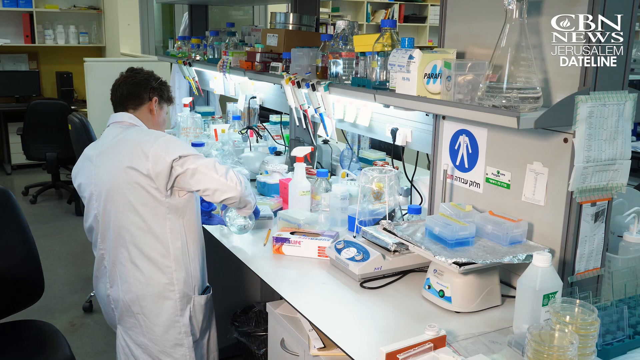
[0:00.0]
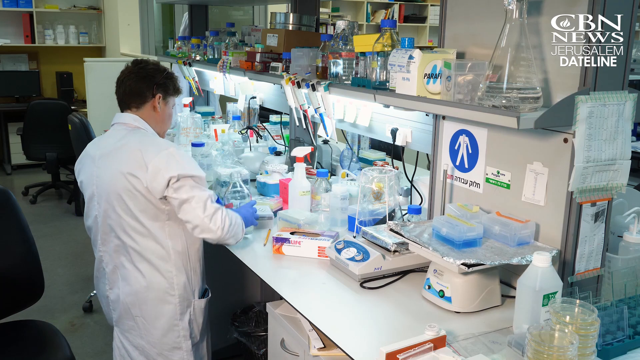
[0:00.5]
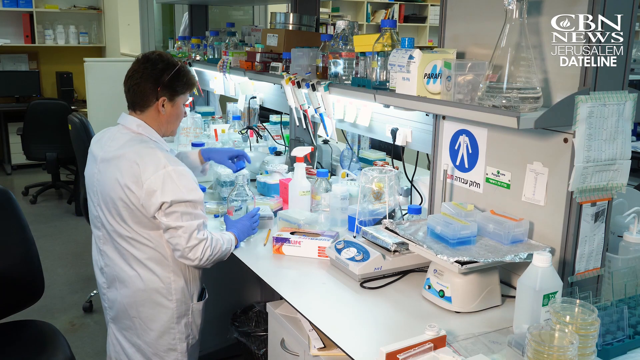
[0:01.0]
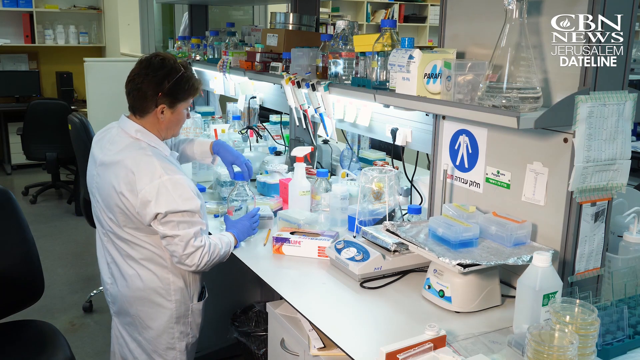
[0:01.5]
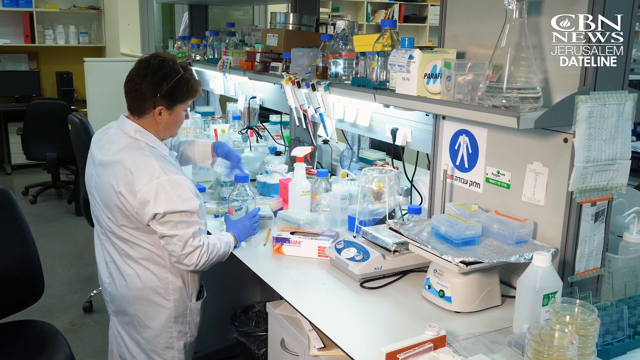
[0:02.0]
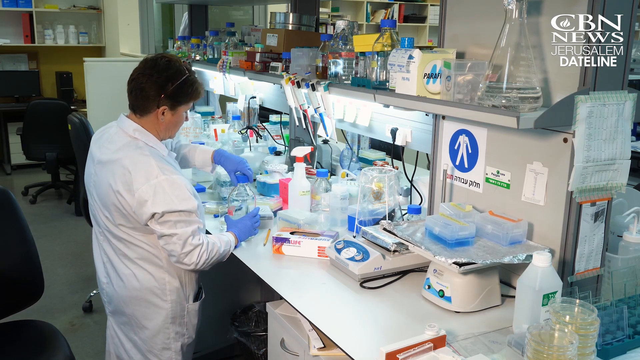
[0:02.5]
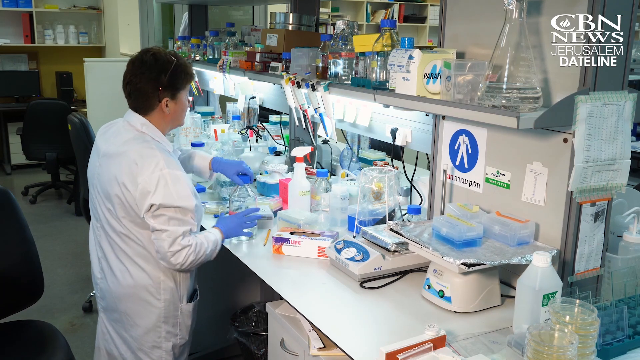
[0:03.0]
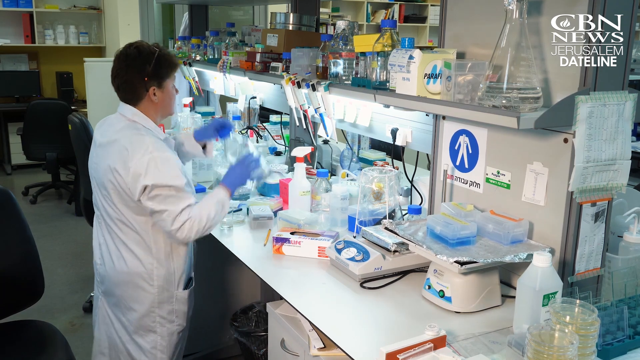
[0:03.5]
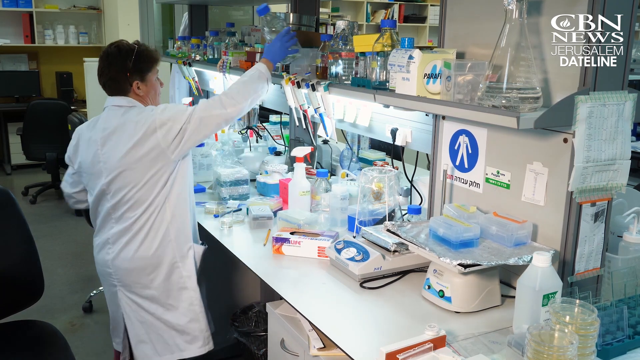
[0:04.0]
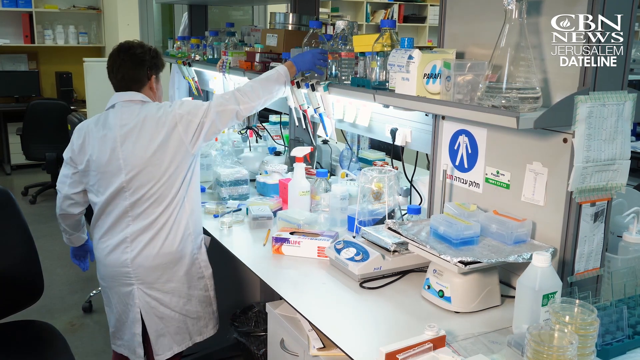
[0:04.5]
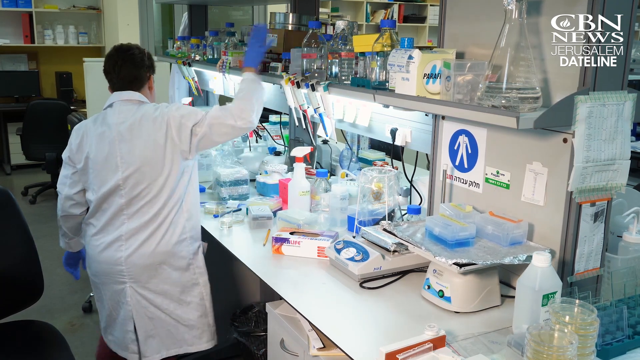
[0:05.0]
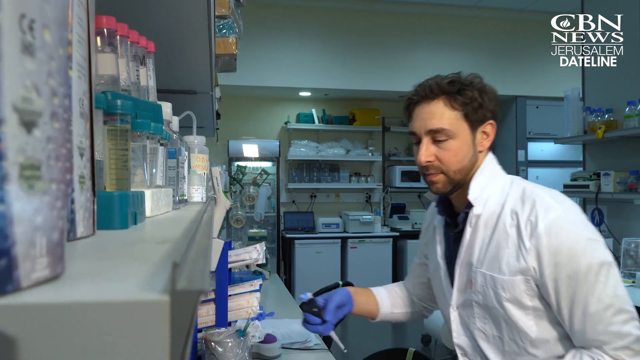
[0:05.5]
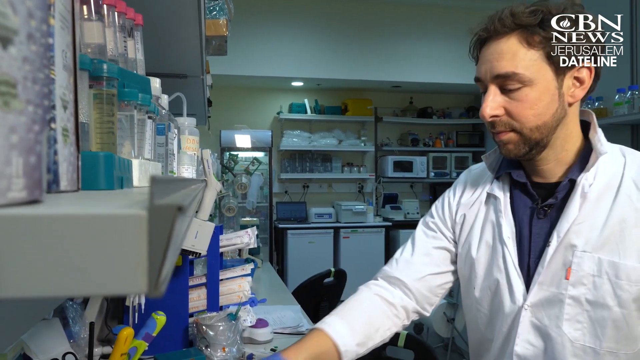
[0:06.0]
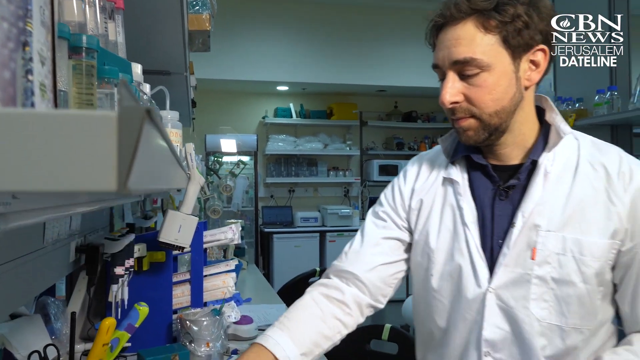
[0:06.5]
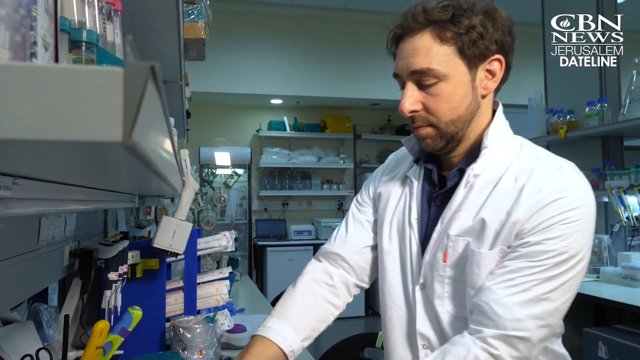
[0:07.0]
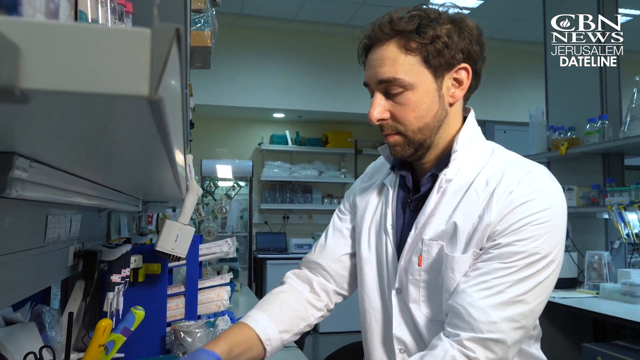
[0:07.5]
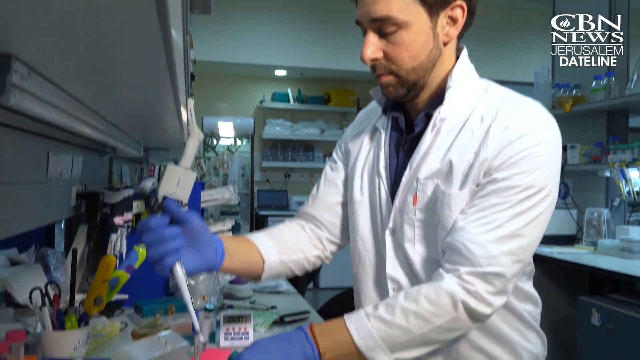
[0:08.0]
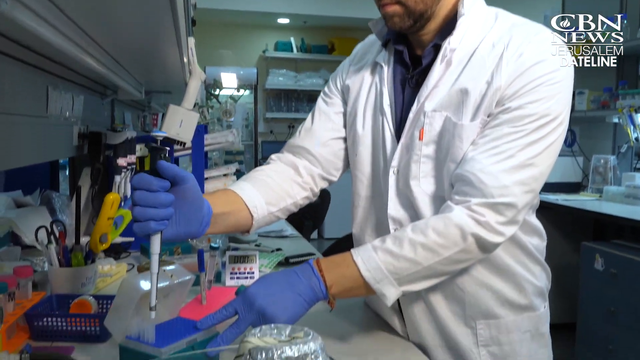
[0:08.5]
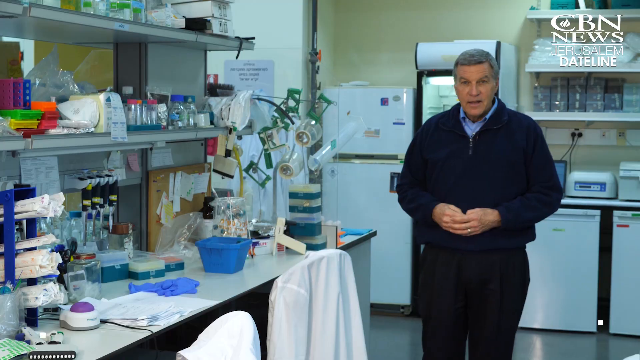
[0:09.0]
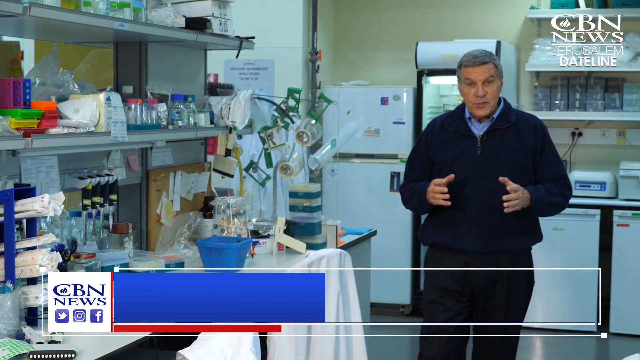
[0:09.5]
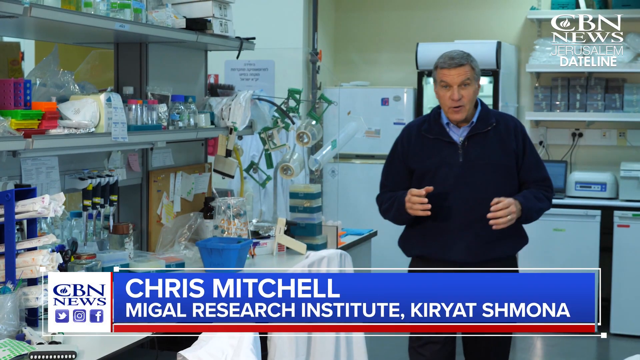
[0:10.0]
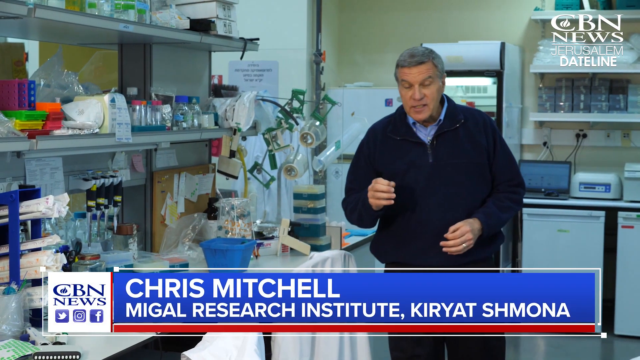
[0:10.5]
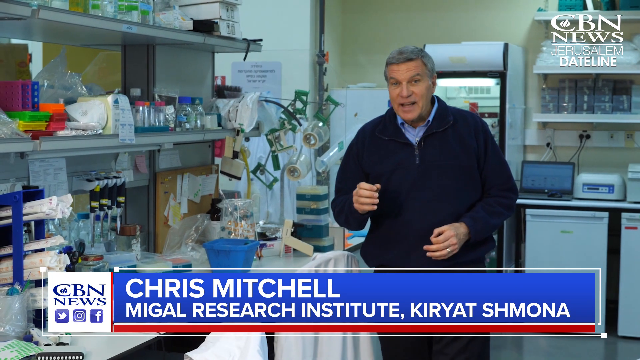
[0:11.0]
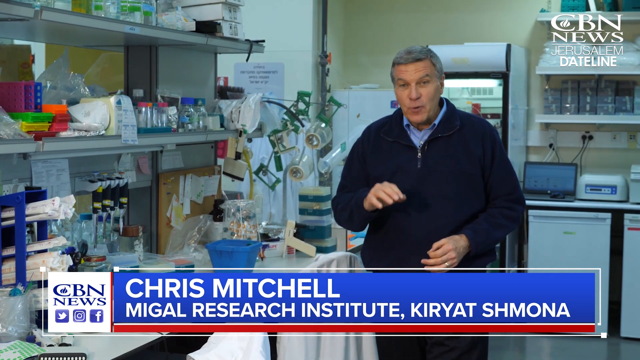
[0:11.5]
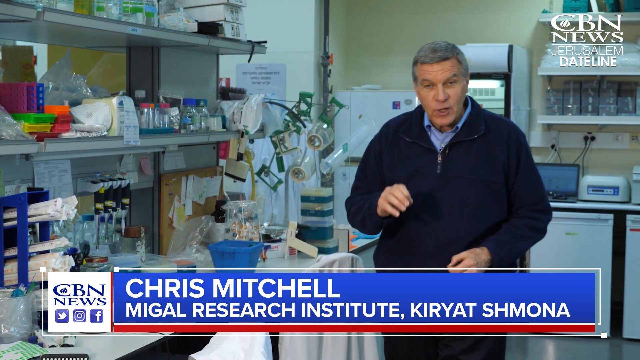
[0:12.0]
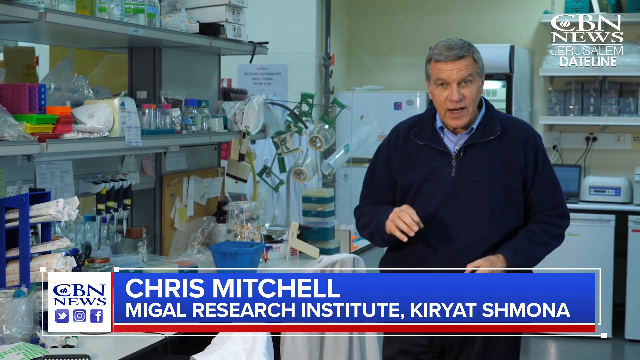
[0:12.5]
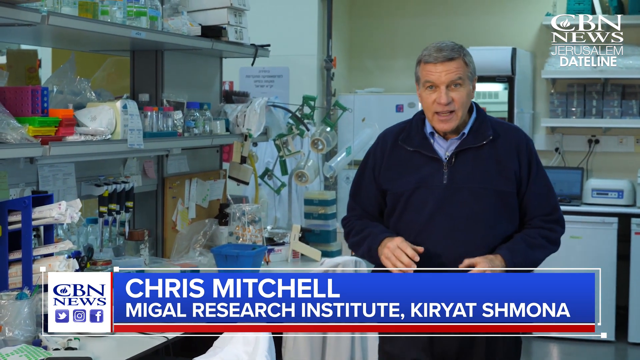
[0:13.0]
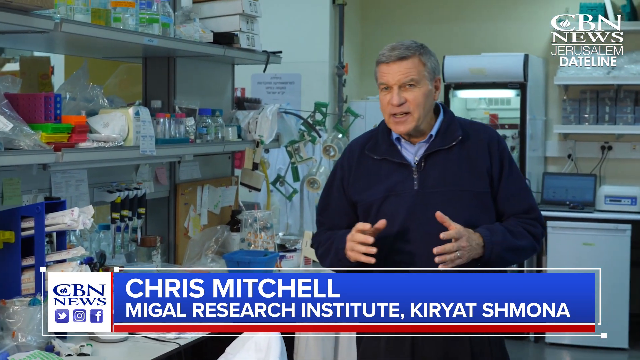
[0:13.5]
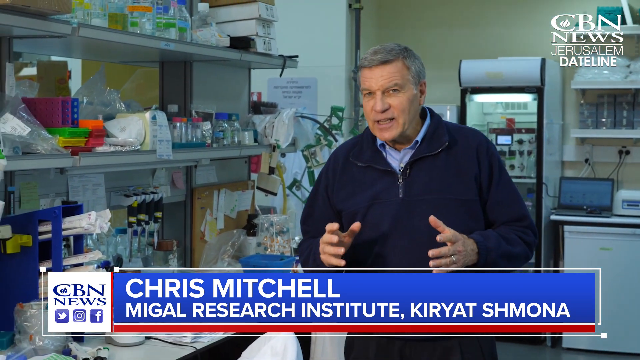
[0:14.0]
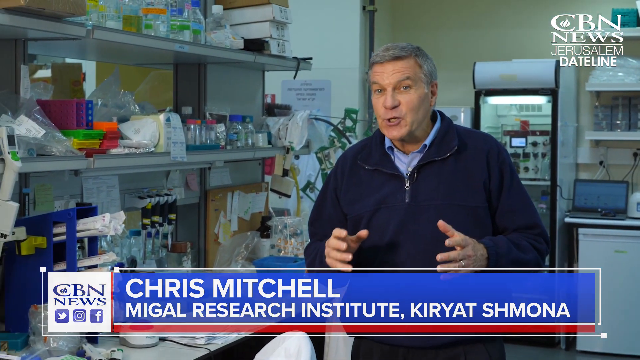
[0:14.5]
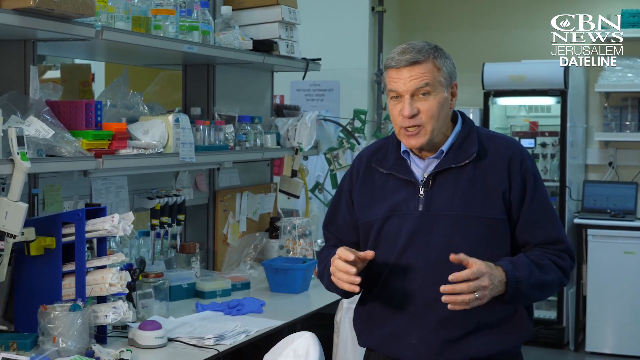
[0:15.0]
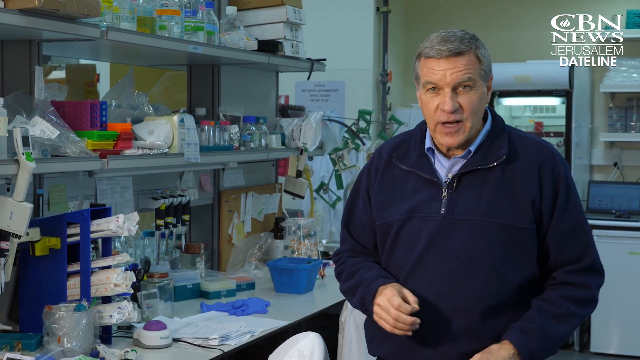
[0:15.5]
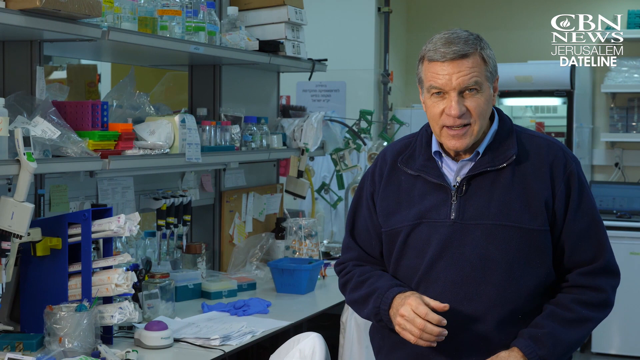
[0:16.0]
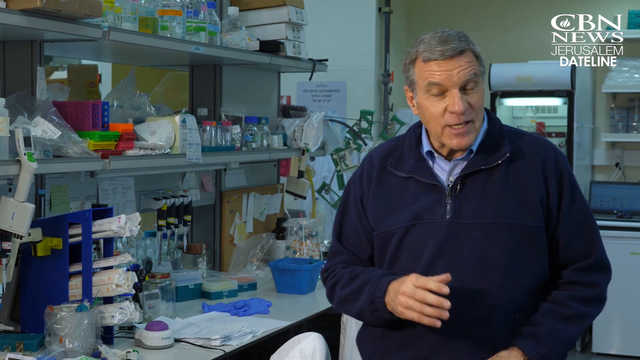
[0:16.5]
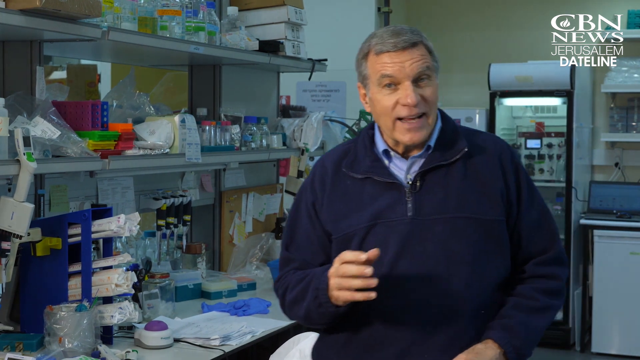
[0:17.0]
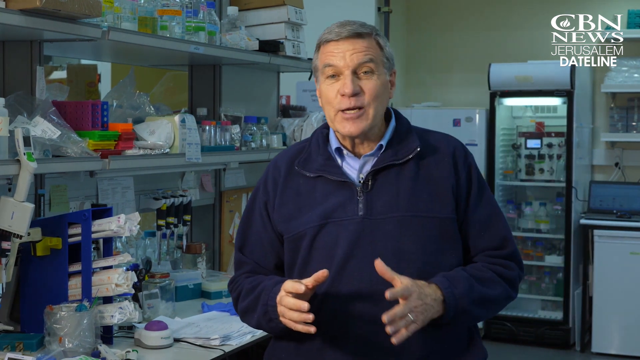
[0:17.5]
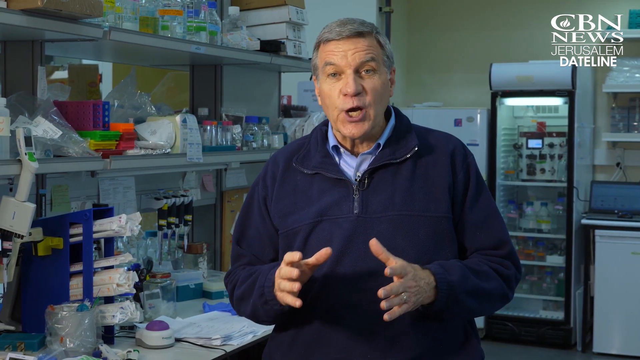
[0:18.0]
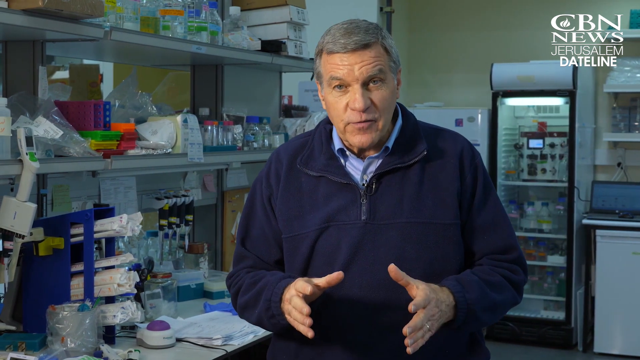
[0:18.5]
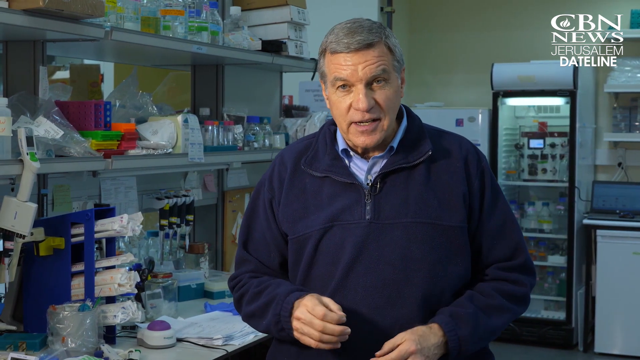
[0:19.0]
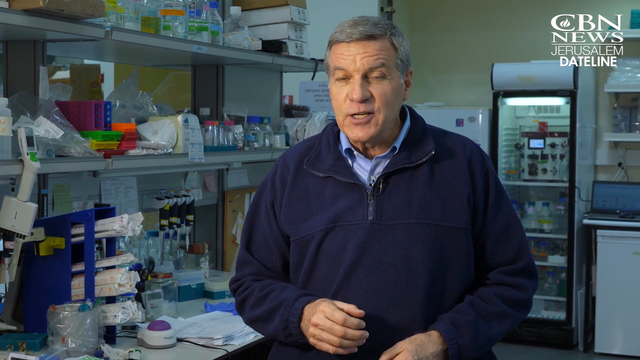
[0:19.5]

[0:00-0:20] A man works with a bunch of chemicals at a desk right in front of him. There are a lot of beakers, a spray bottle, and a number of plastic containers that hold a couple of things. To his right, a weird tray bounces on a scale and moves in a sort of reverse circular fashion. He then goes up to another dropper and starts to use it. The video cuts to a man who is apparently doing a news story; on-screen text identifies him as Chris Mitchell, with "Michael Research Institute Kyriac Shmona" and "CBN News". The scientist wears a white lab coat and blue rubber gloves, and has short black hair and a light goatee that is not bushy.